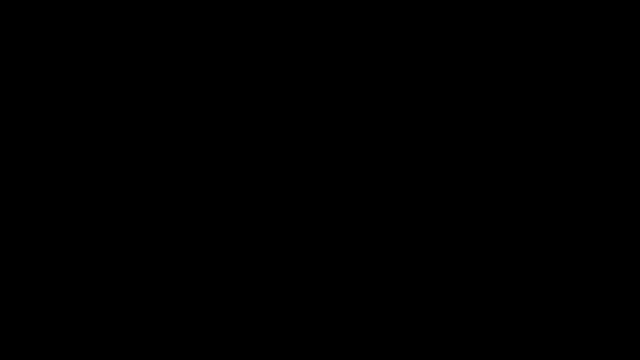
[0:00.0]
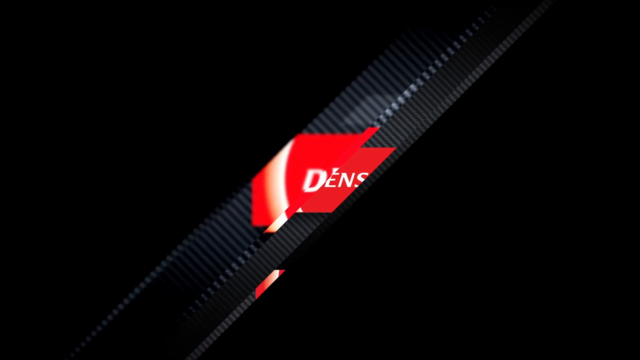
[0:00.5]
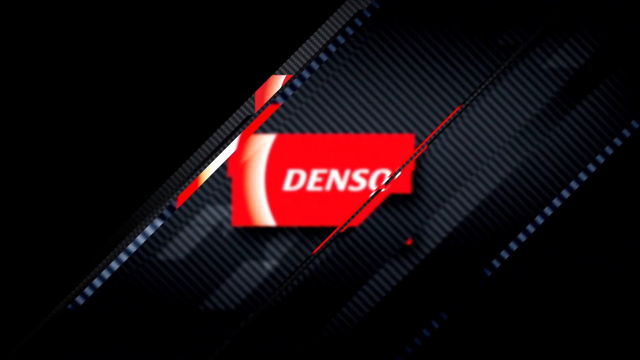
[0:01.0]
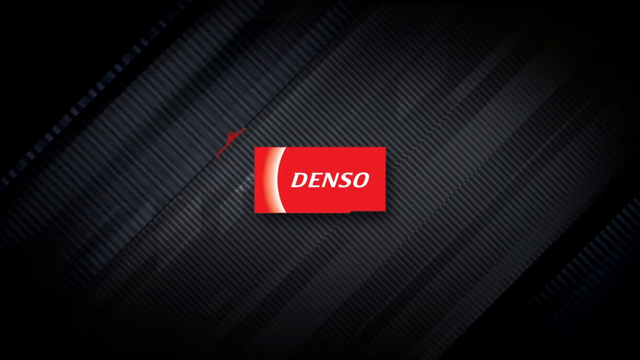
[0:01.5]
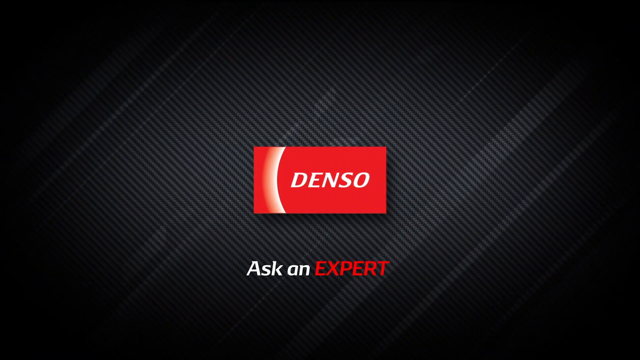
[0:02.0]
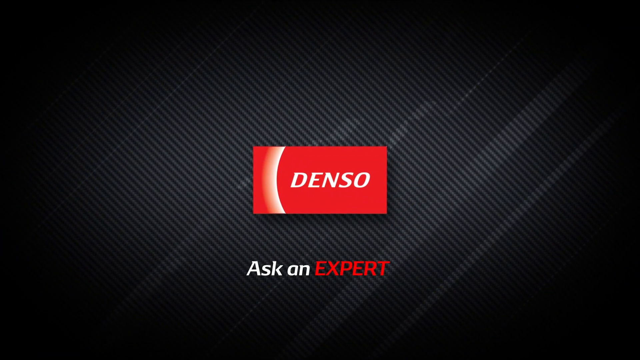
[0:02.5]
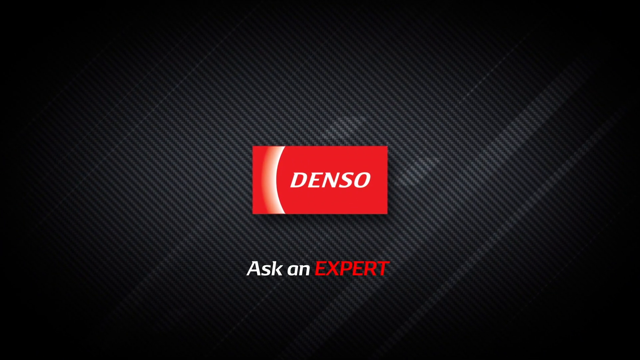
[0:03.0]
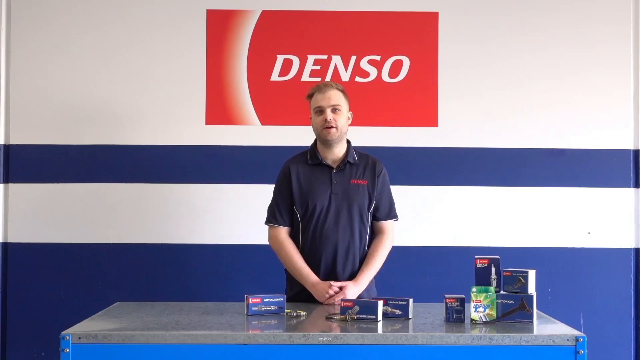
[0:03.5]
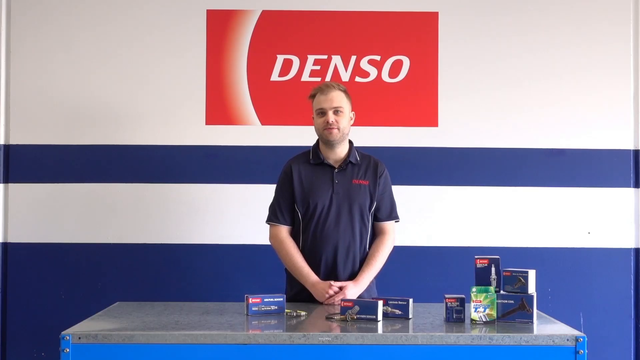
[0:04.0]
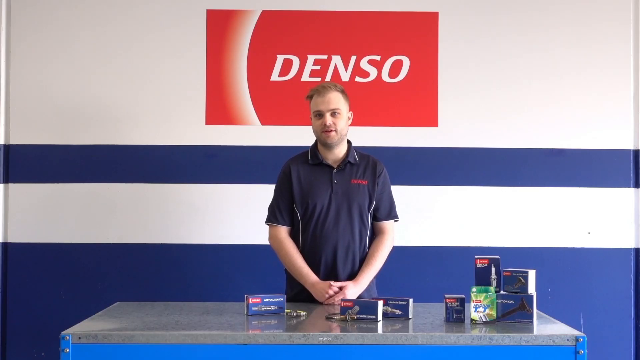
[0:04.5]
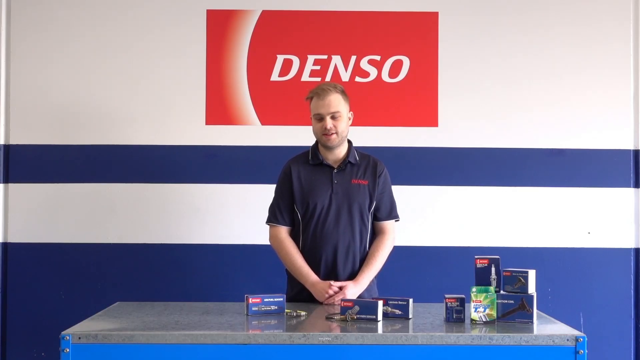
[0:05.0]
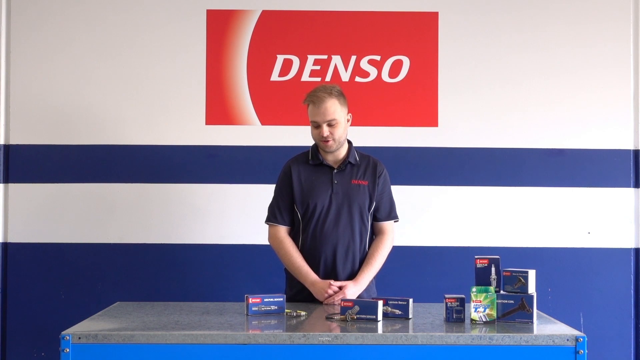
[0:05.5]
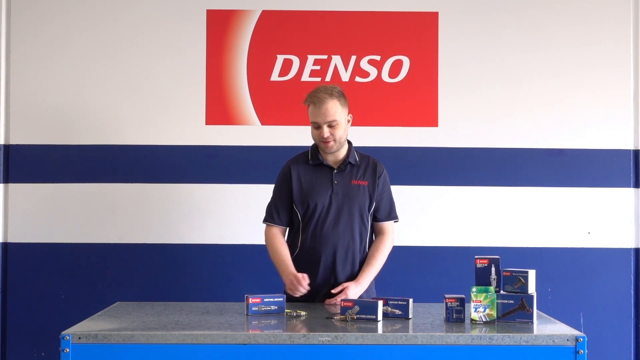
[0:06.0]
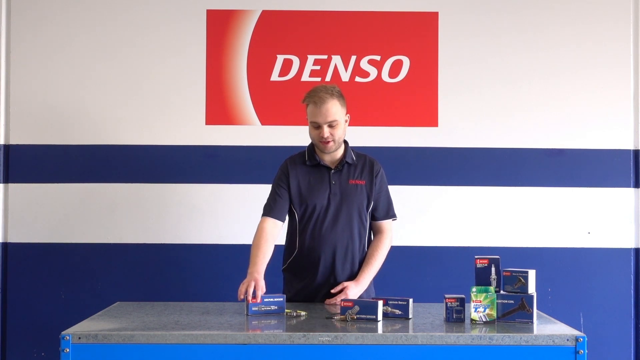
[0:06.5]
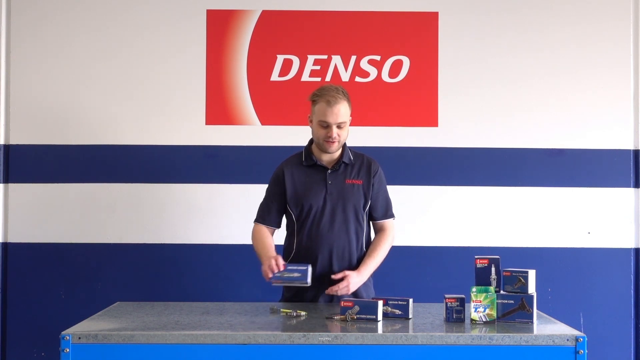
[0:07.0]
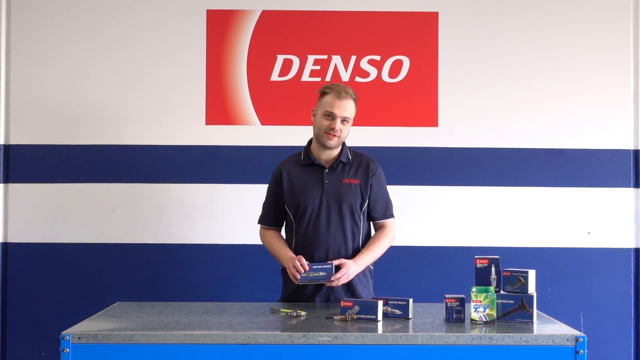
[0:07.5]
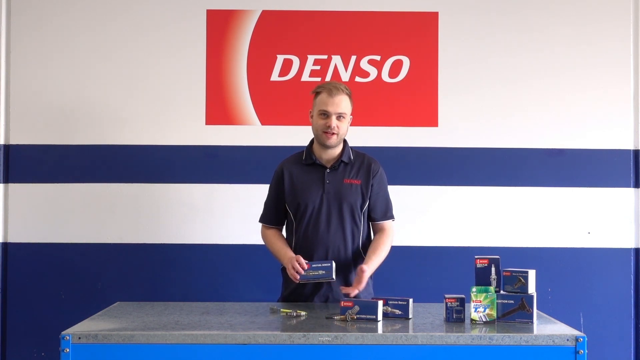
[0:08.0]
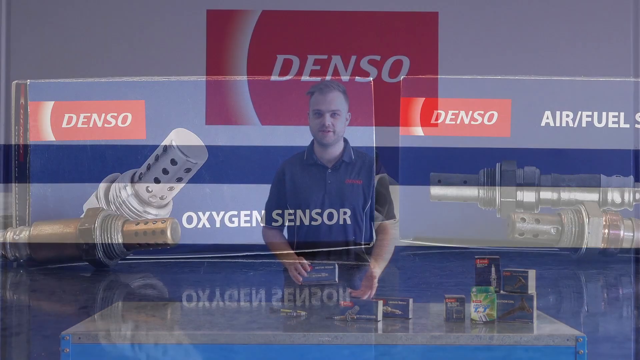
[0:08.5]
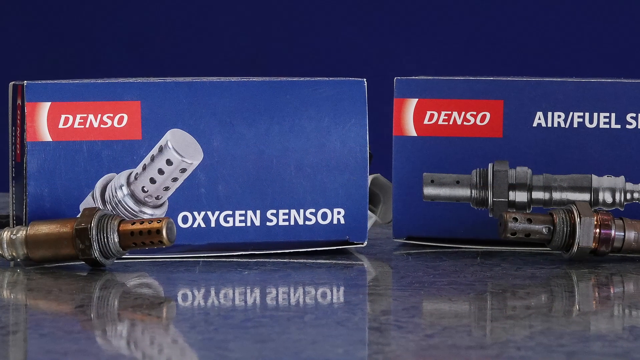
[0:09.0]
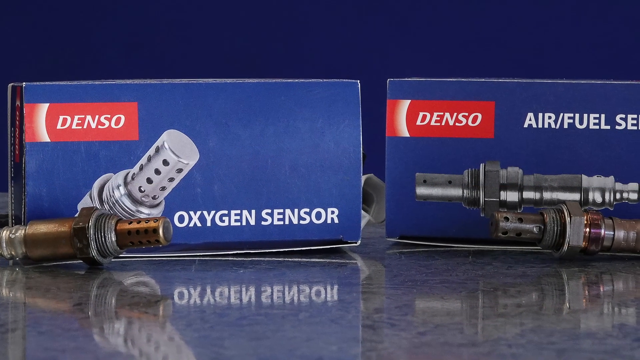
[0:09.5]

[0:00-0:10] The screen is black, then a red rectangle comes up with "DENSO" in white. Then more text appears in red, with blue letters reading "expert." A man appears who looks like he is wearing a company shirt, a blue polo, and he is standing in front of the company sign, which reads "DENSO" in white on a red rectangle. A white line, kind of like neon, curves along the left side of the sign. The wall he stands in front of is striped white and navy blue. His hands are crossed and he talks, then looks down to the left and touches an object on the left labelled "oxygen sensor" in all capital letters; the box is rectangular. The company sign is visible in the upper left corner. He is showing company products.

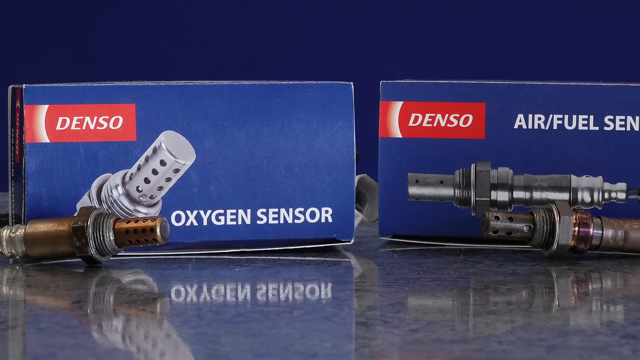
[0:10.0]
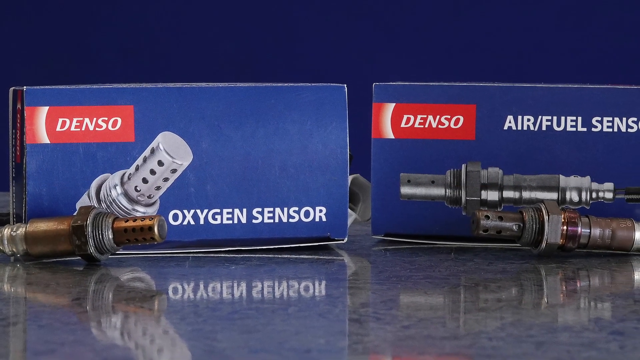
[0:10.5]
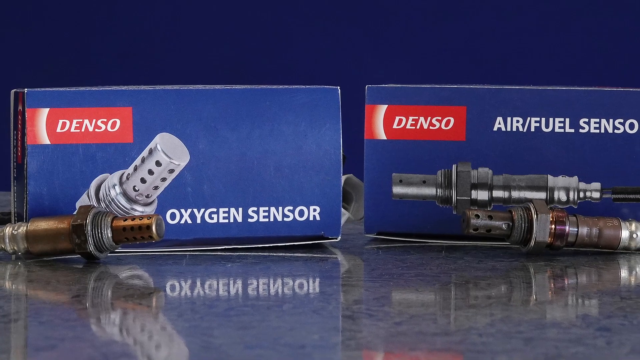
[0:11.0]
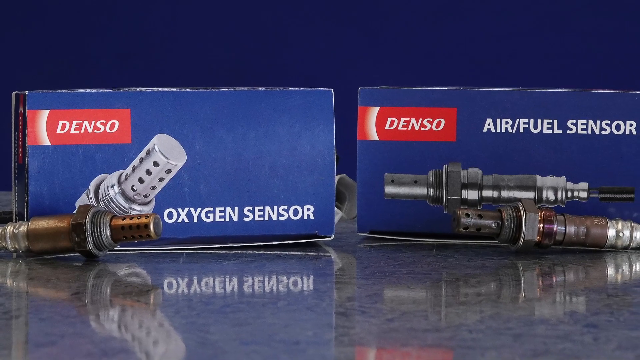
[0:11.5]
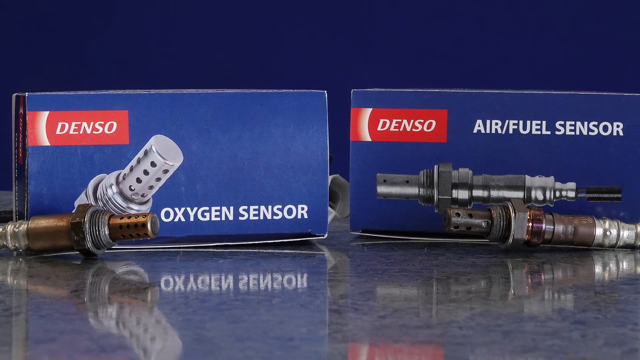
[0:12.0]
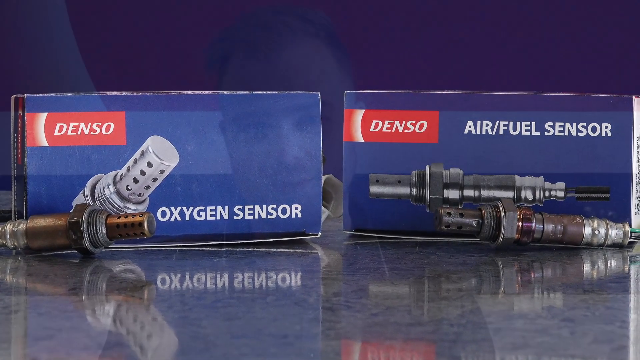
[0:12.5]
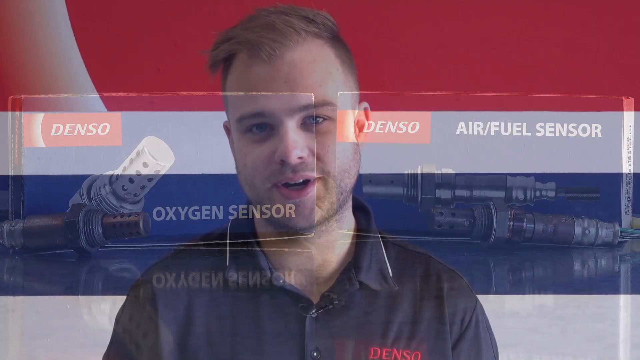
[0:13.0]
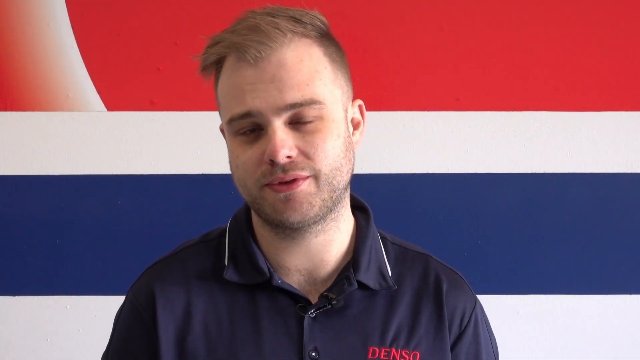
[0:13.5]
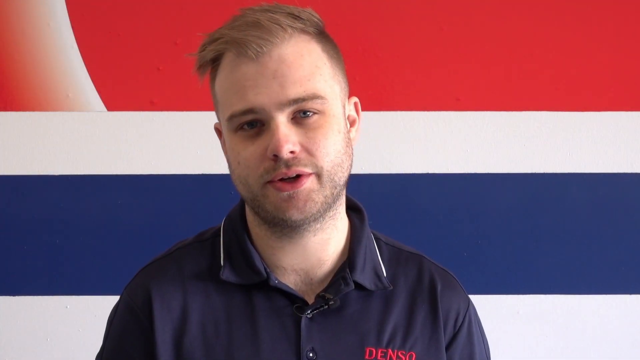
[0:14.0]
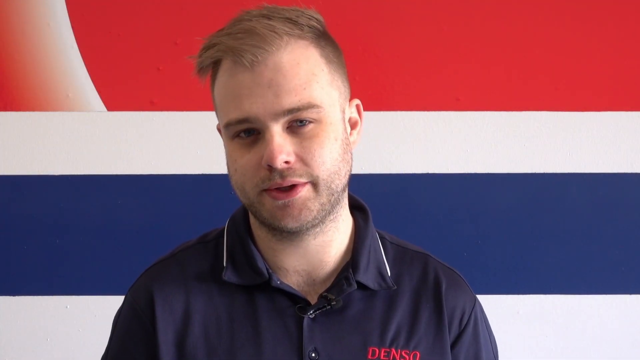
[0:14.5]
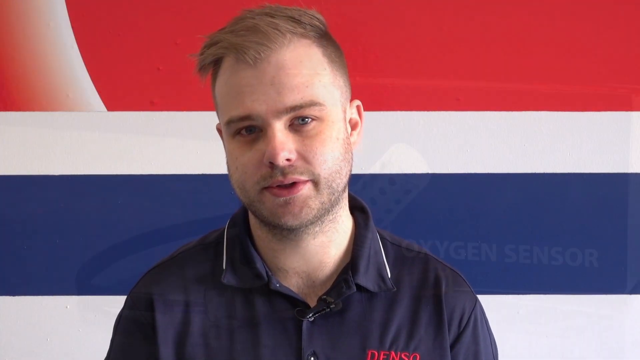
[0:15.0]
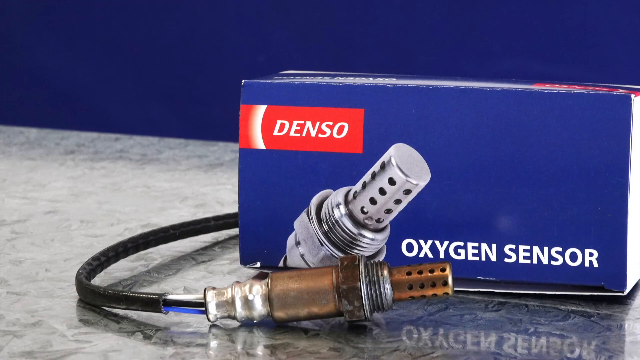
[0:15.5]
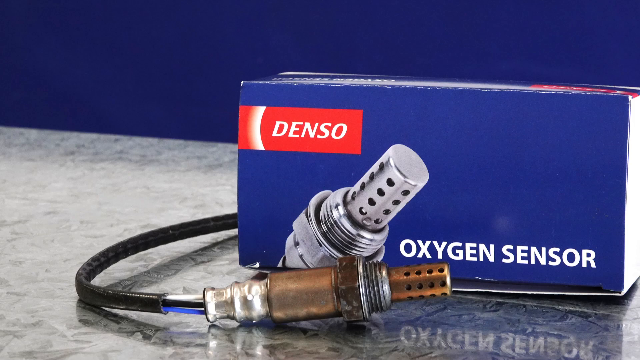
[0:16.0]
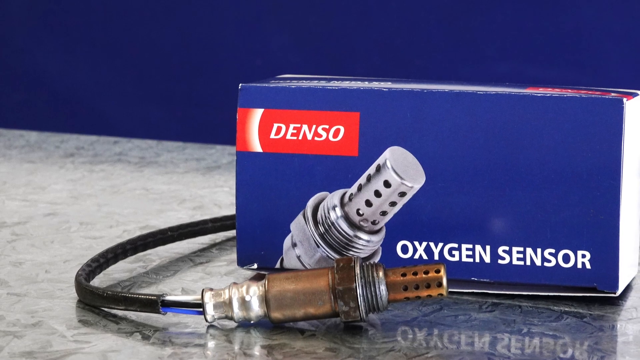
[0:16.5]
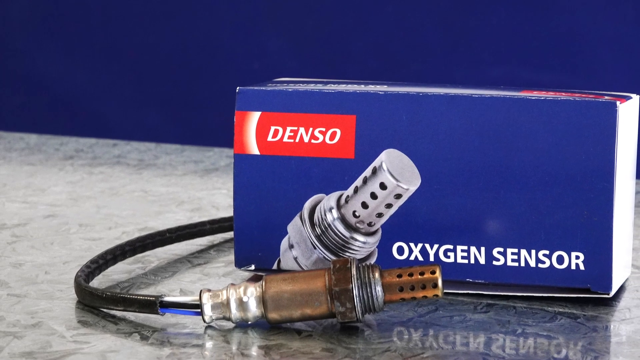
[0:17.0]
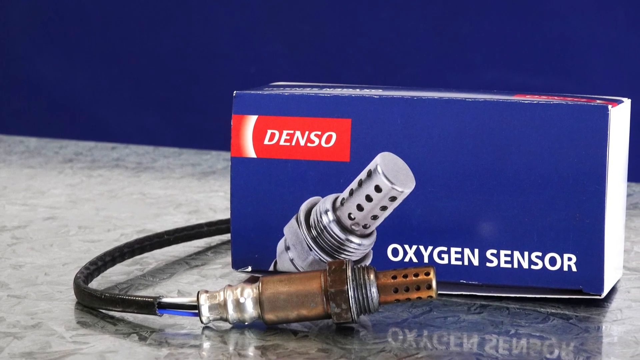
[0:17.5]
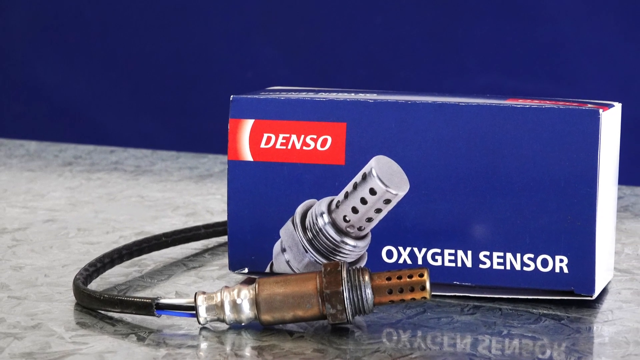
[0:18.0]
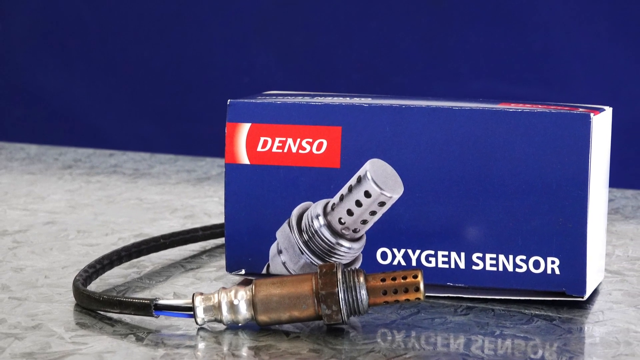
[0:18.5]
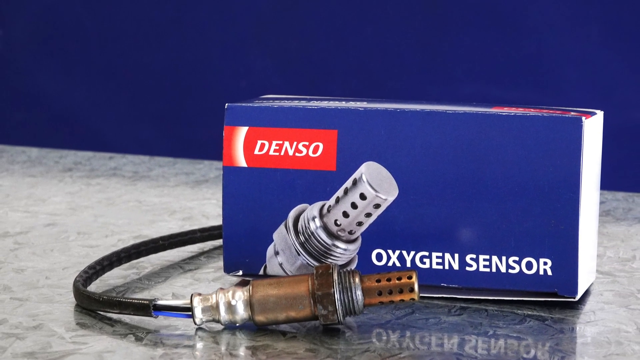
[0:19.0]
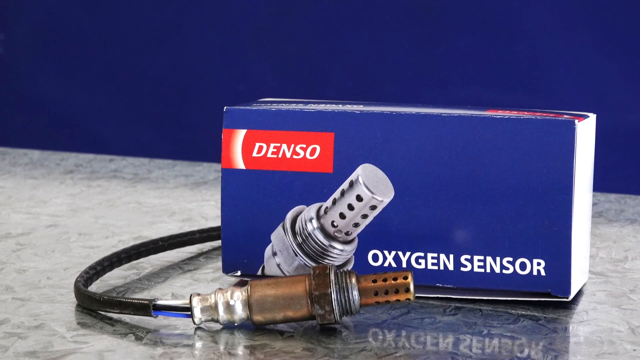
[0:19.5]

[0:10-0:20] Products from the company, Denso, are shown, with the "DENSO" logo in the upper left corner. One box says "oxygen sensor" and the next says "air/fuel sensor." An image of the product is on the box, and the actual product is in front of it; it looks darker and a little bronze, so the parts are apparently used. The camera zooms out to show everything, then the video returns to the man talking. The oxygen sensor is shown next, with a black cord connected to it, and it stays on screen for a few seconds after the camera zooms out very slightly.